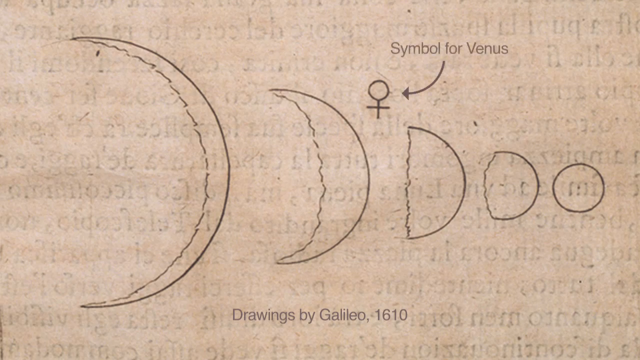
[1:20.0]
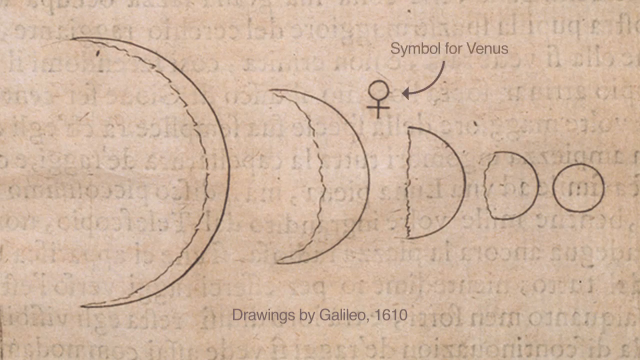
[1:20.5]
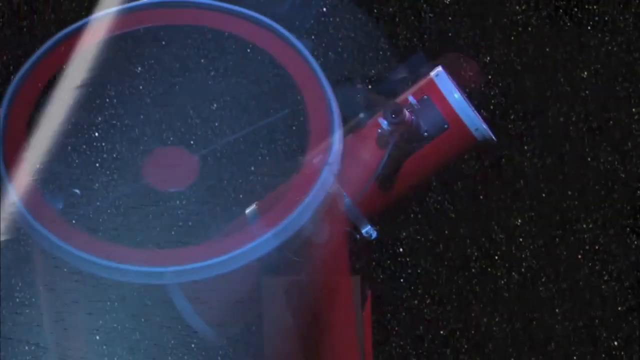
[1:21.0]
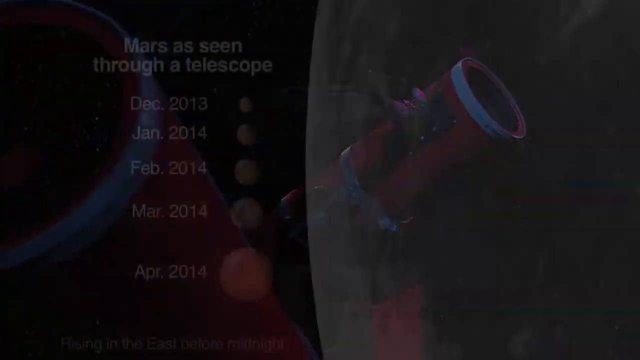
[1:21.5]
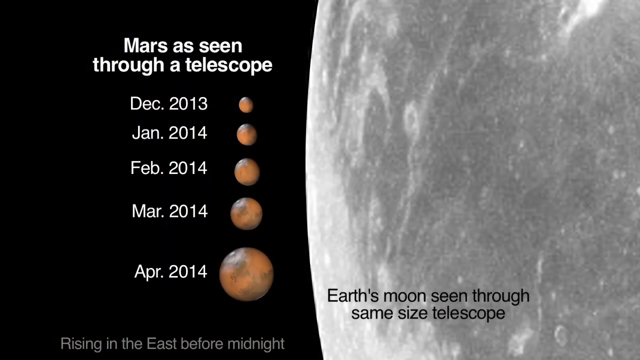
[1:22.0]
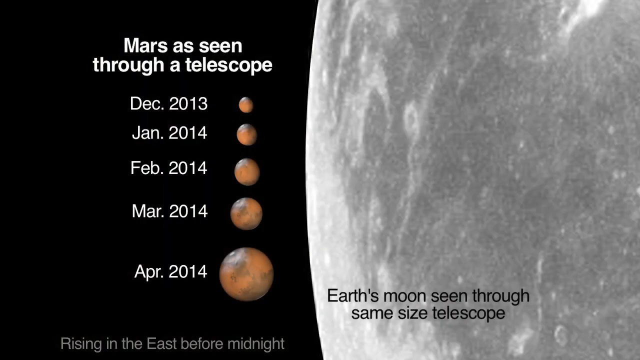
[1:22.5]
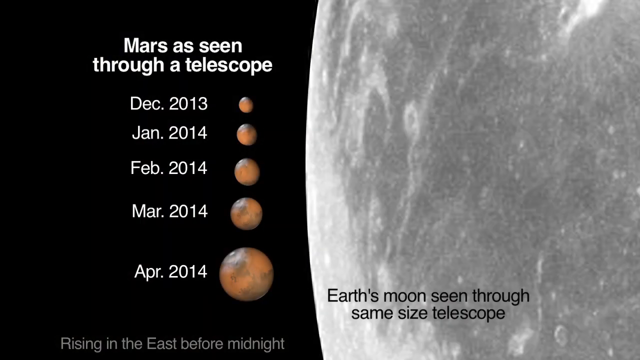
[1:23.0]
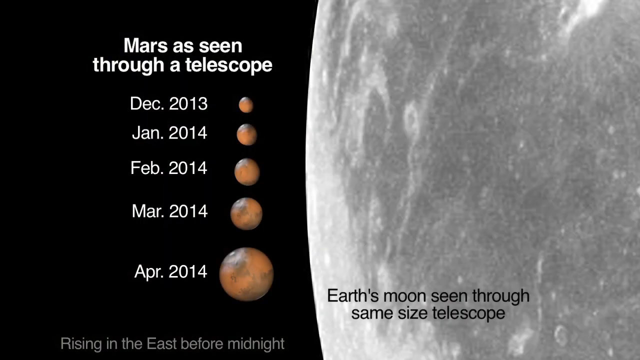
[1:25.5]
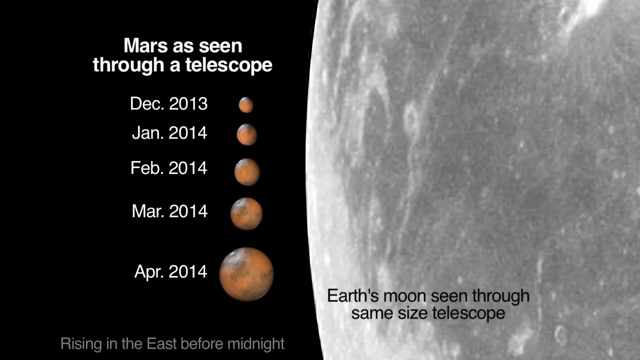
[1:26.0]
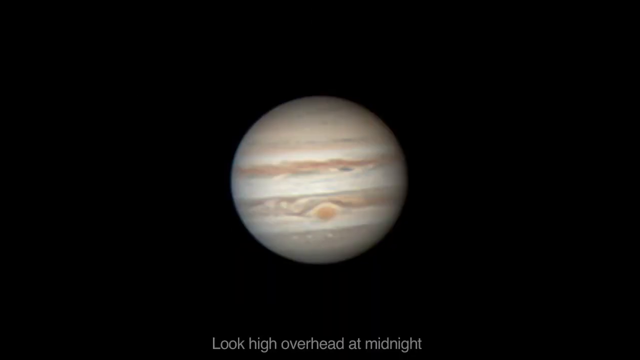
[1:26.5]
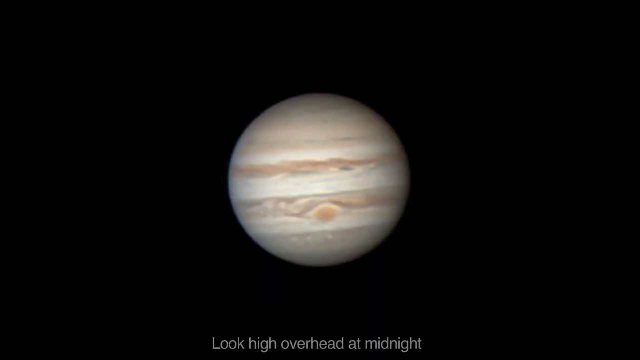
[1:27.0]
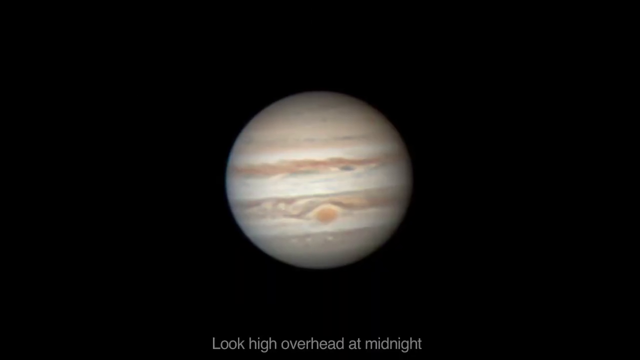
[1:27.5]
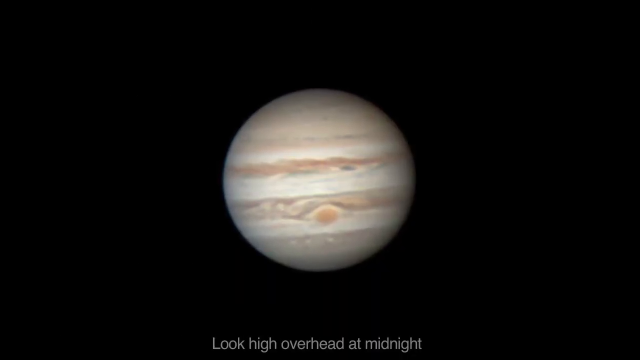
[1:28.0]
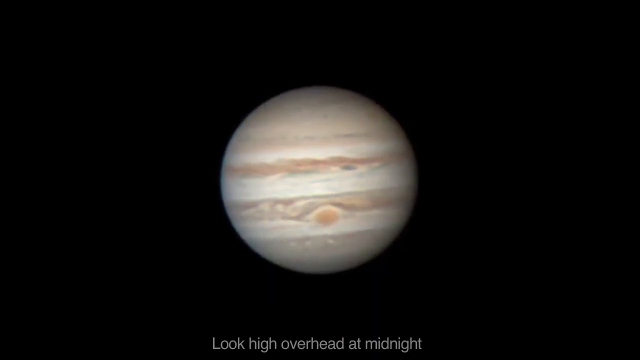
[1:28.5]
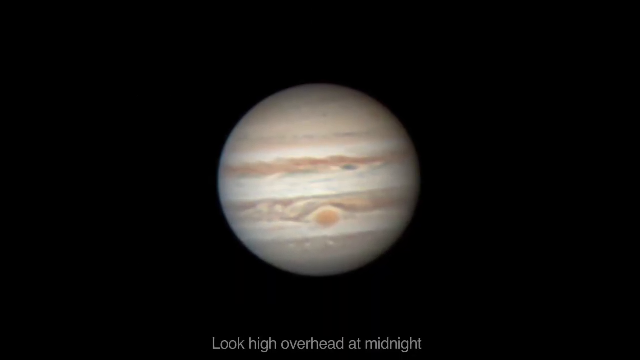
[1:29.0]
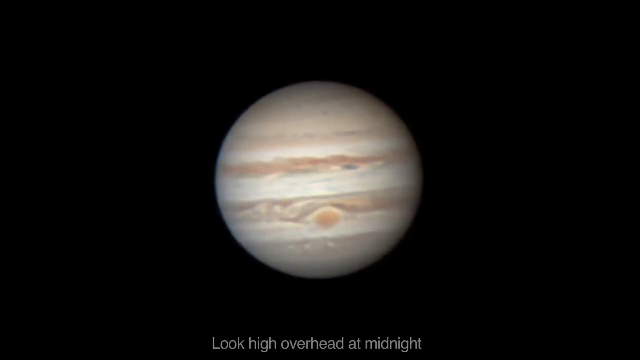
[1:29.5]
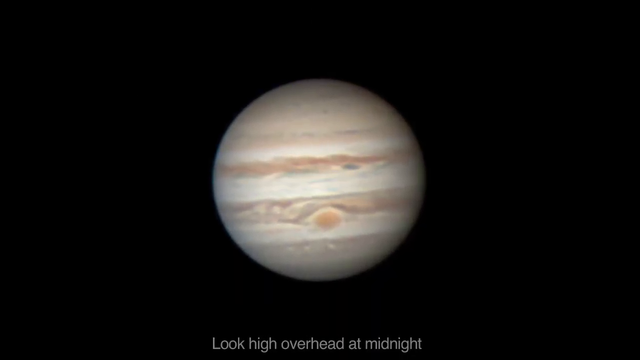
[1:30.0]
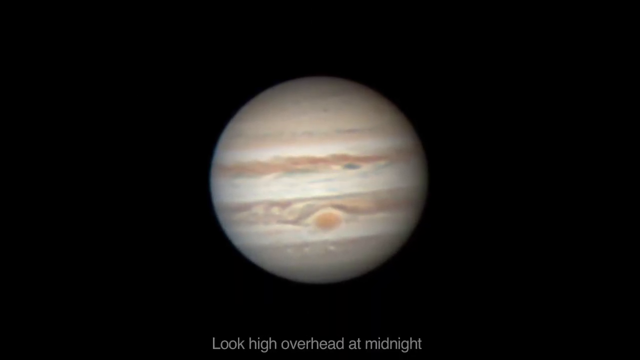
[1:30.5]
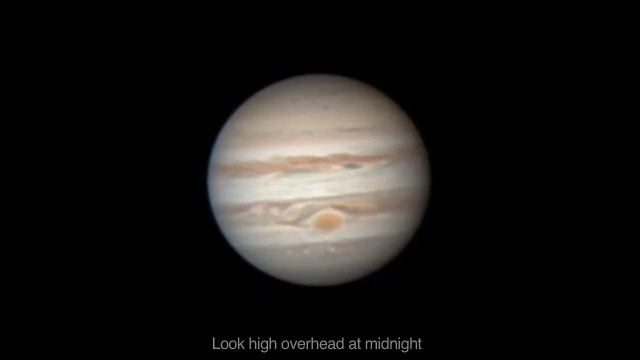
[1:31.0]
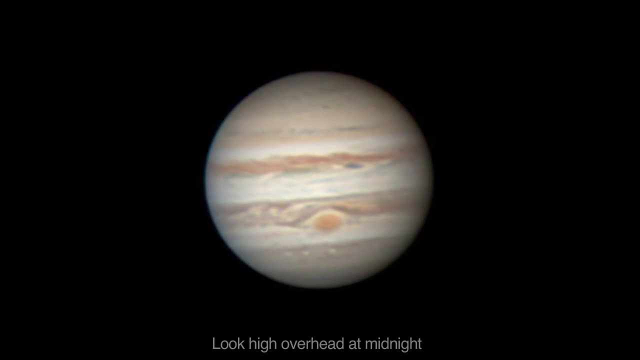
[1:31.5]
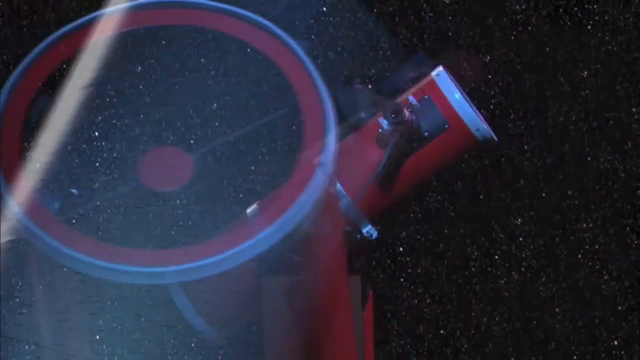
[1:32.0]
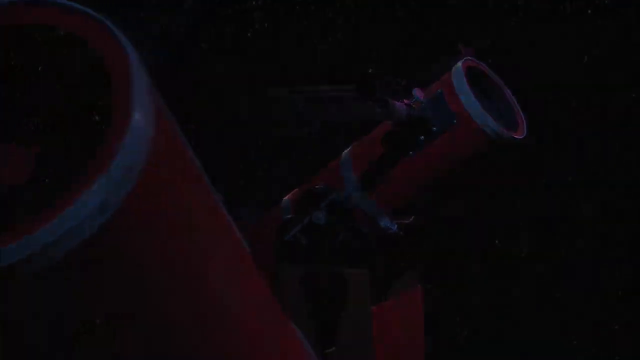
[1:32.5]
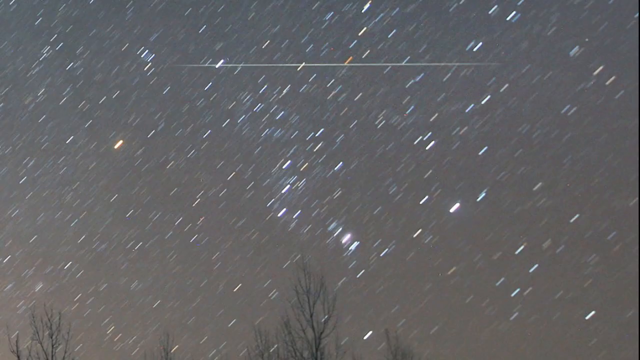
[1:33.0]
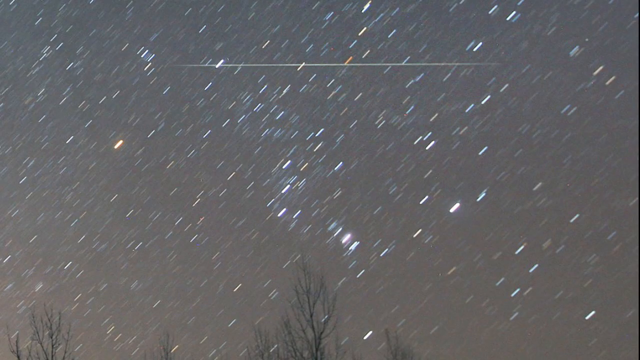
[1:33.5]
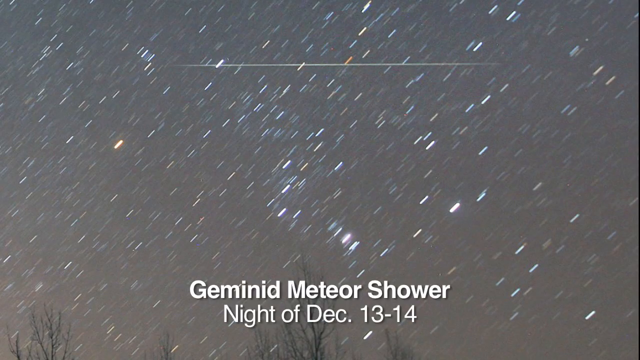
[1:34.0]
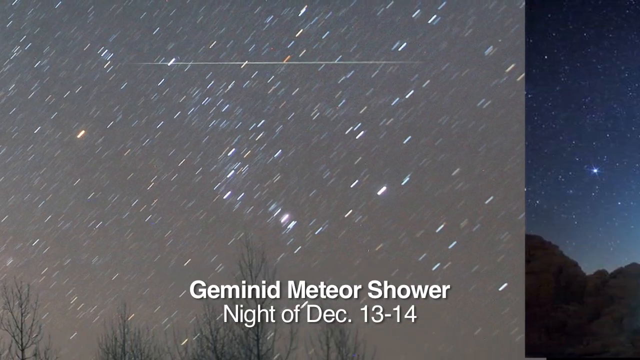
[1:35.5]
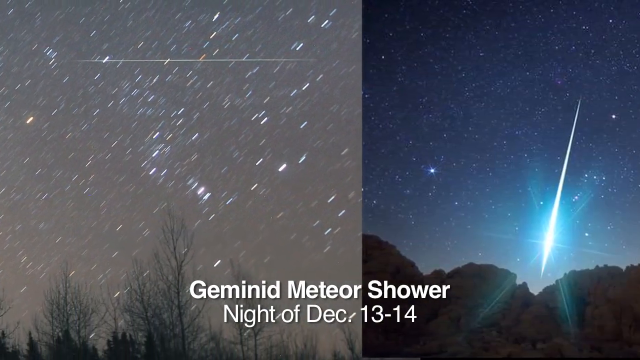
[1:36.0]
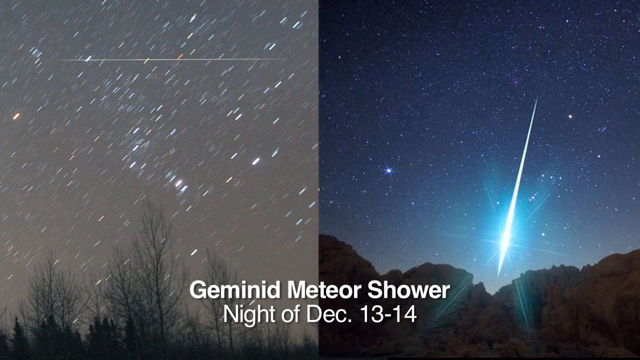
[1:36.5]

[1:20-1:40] Drawings by Galileo are shown, along with Mars as seen through a telescope in December 2013, January 2014, February 2014, March 2014 and April 2014, and Earth's moon seen through the same size telescope. A picture appears that looks like it could be Mars. A telescope floats around, and the Geminid meteor shower of the night of December 13 through 14 is shown in a picture where a meteor looks like a big lightning bolt. A drawing of Galileo follows, and Earth's moon is shown high overhead at midnight, with the Earth. Telescopes float around, and meteor showers appear: small meteors, and one that looks like a long blue lightning bolt. A drawing by Galileo and a picture of Venus are shown.